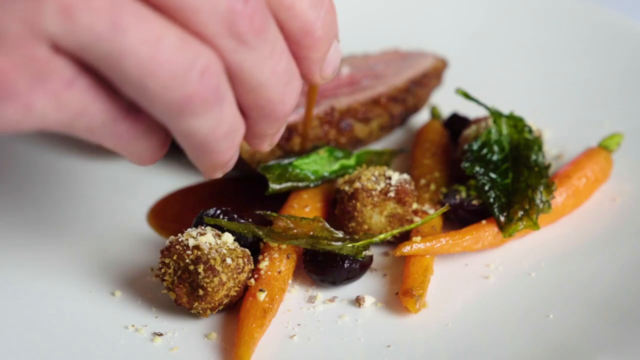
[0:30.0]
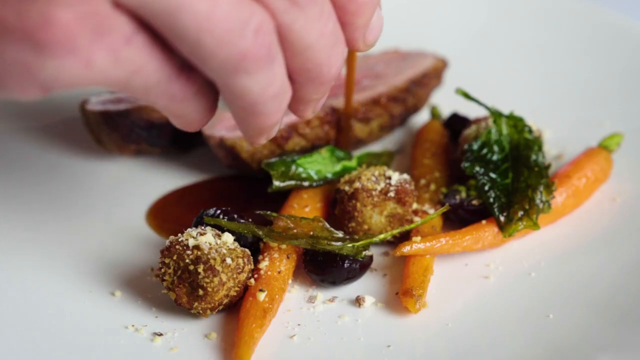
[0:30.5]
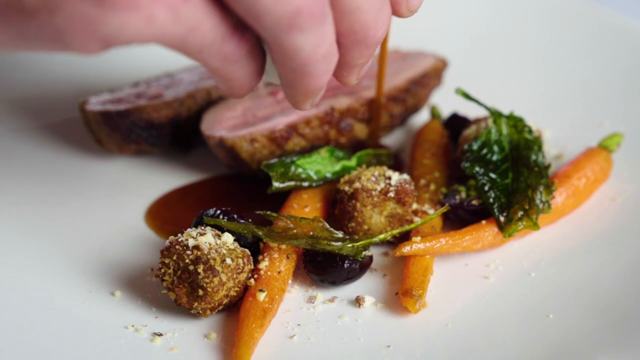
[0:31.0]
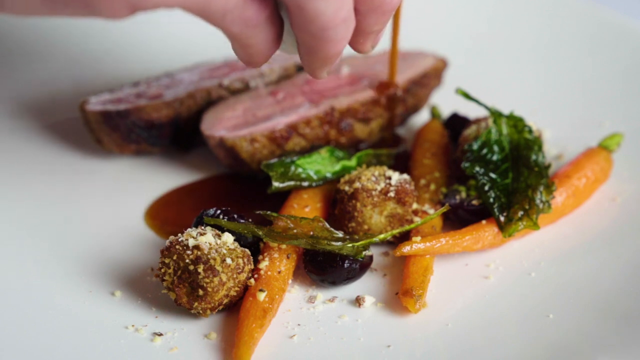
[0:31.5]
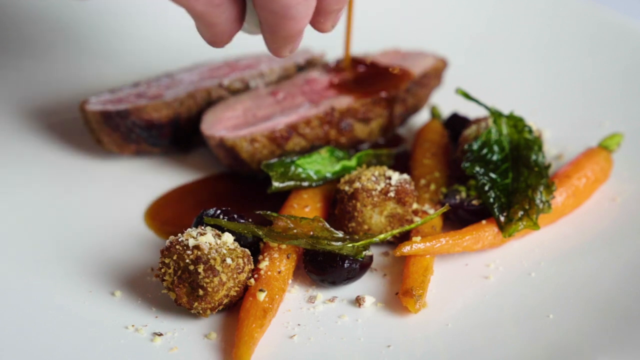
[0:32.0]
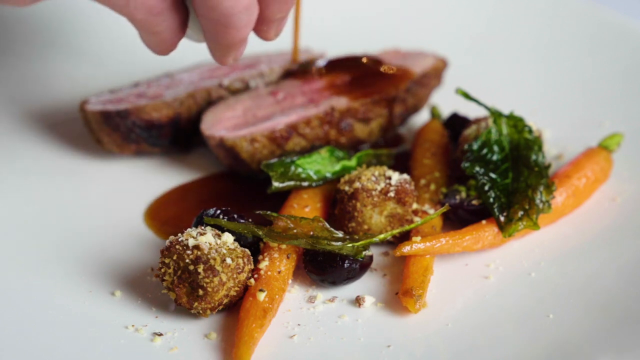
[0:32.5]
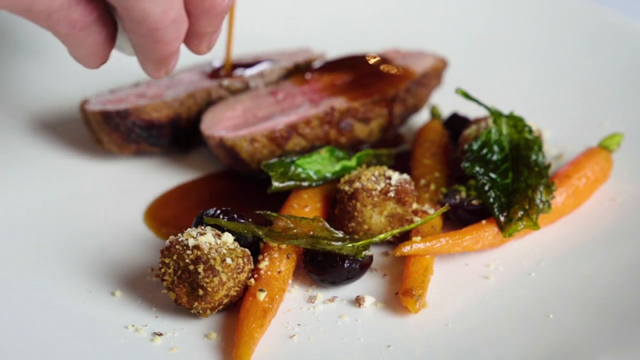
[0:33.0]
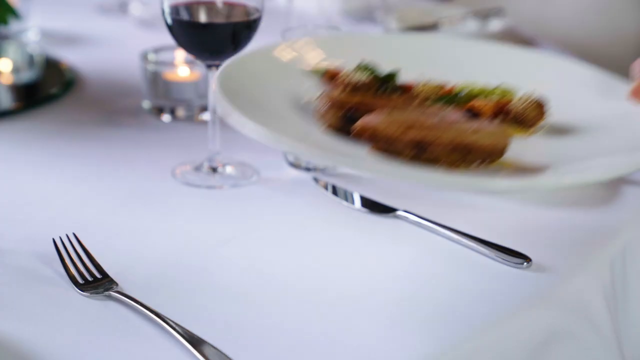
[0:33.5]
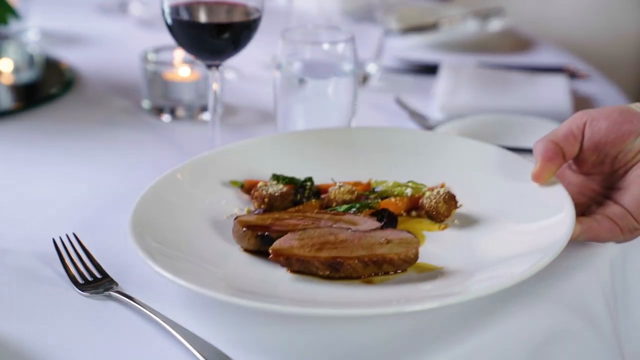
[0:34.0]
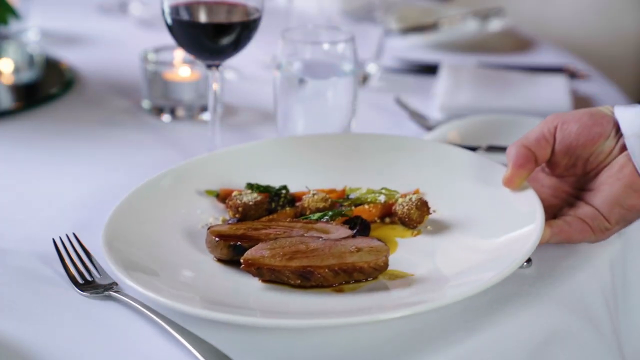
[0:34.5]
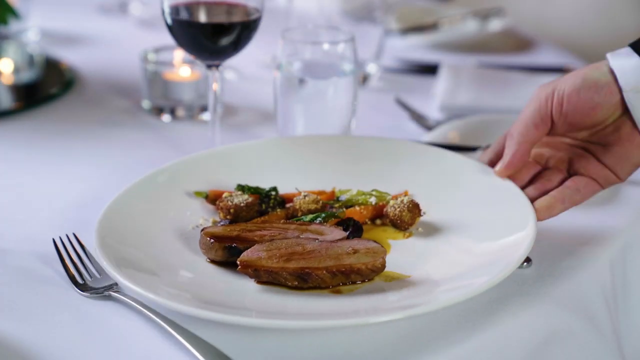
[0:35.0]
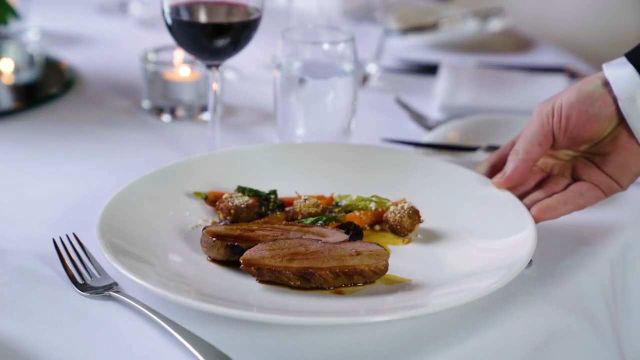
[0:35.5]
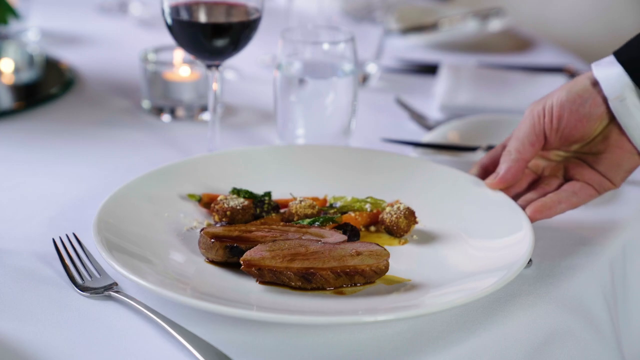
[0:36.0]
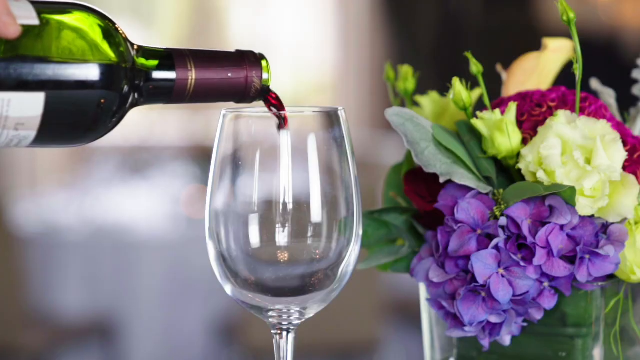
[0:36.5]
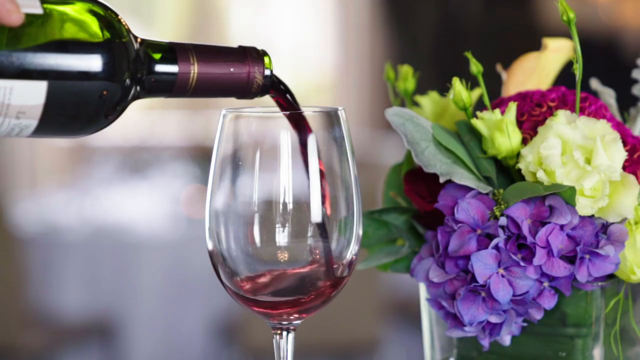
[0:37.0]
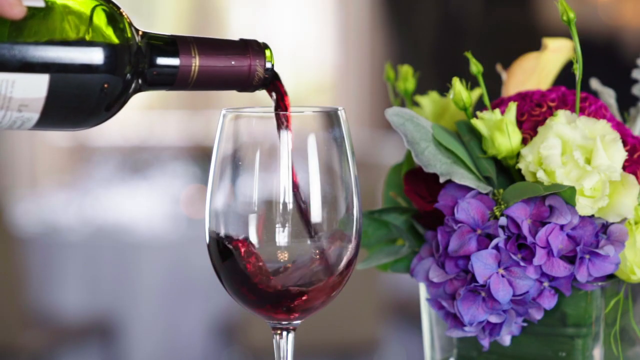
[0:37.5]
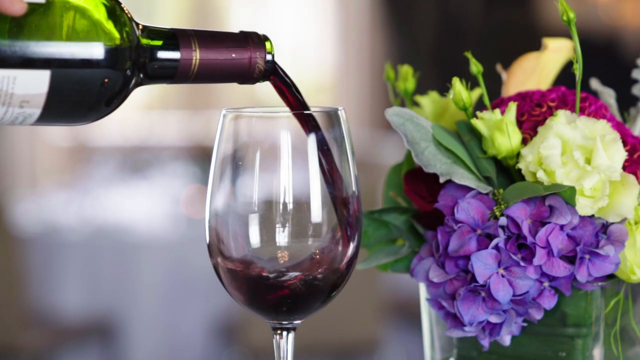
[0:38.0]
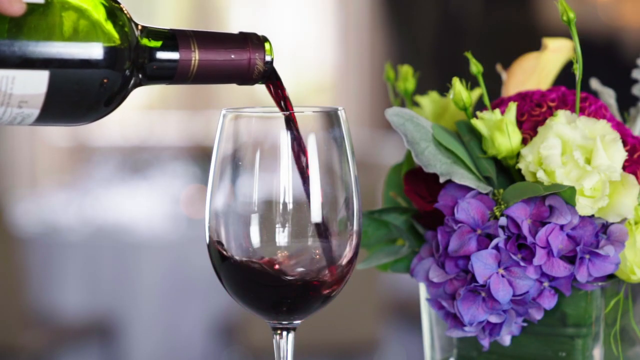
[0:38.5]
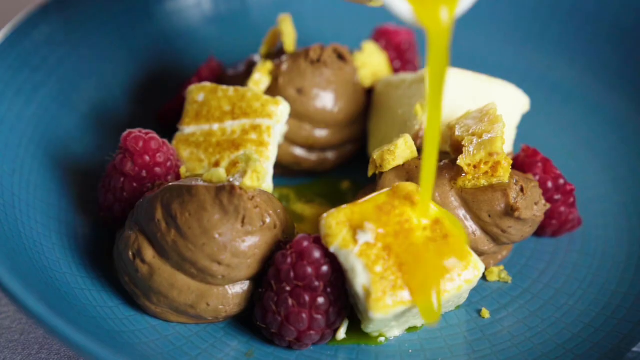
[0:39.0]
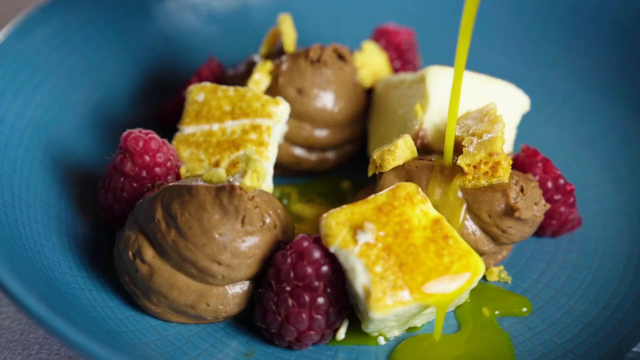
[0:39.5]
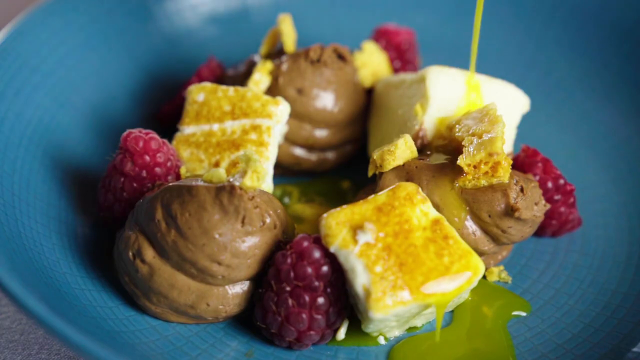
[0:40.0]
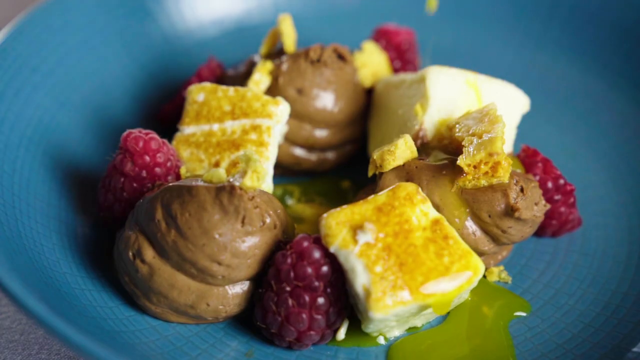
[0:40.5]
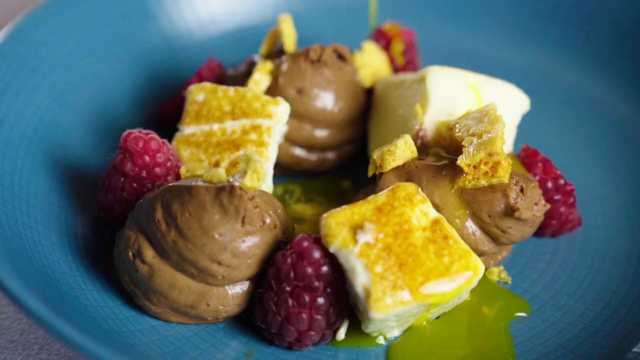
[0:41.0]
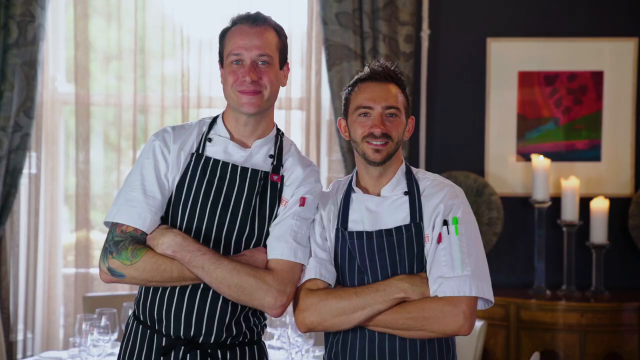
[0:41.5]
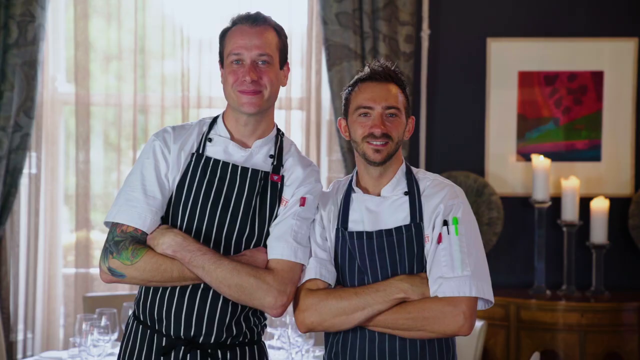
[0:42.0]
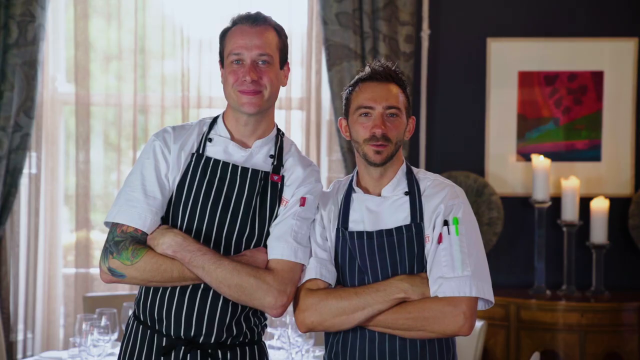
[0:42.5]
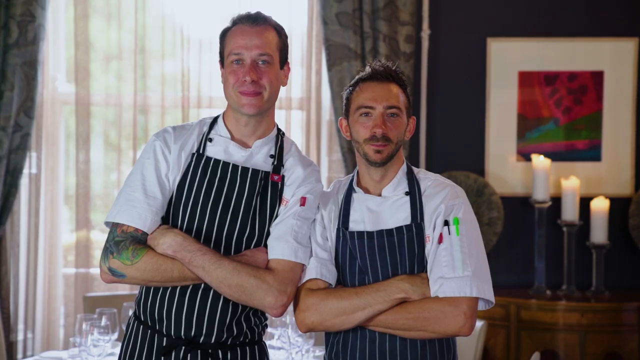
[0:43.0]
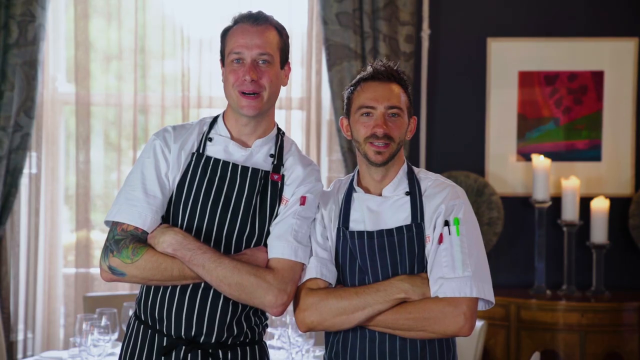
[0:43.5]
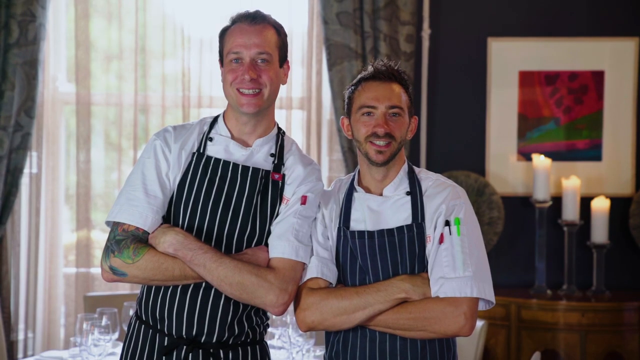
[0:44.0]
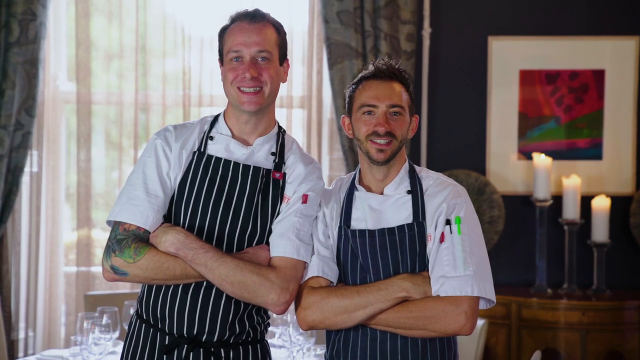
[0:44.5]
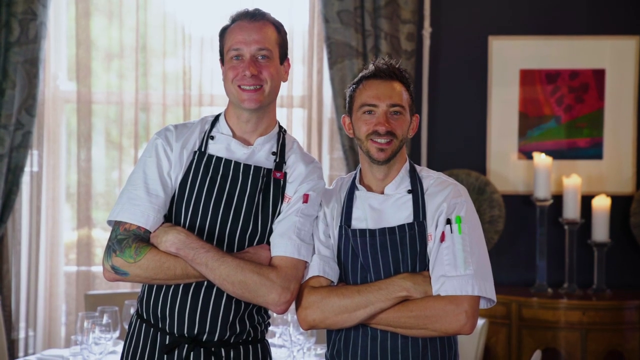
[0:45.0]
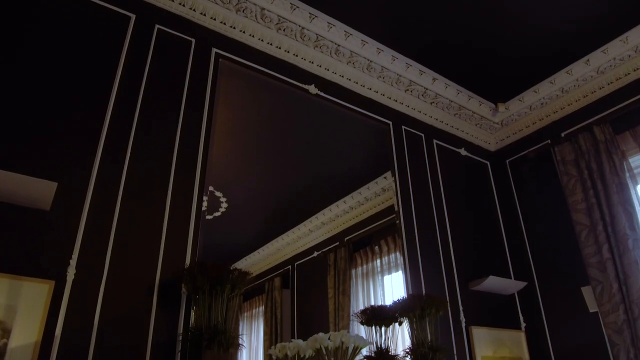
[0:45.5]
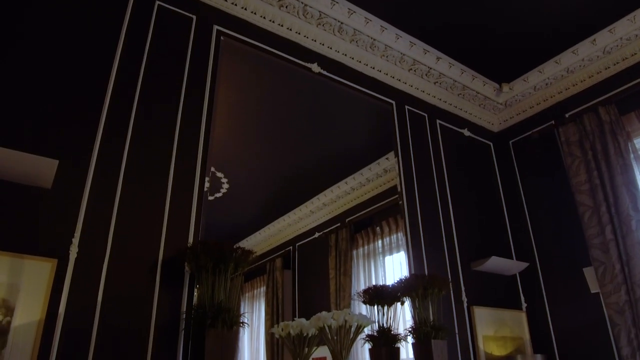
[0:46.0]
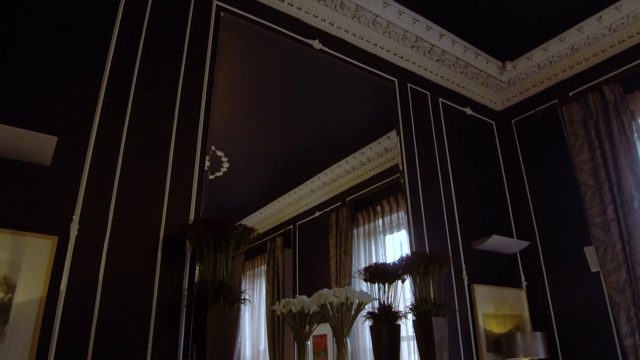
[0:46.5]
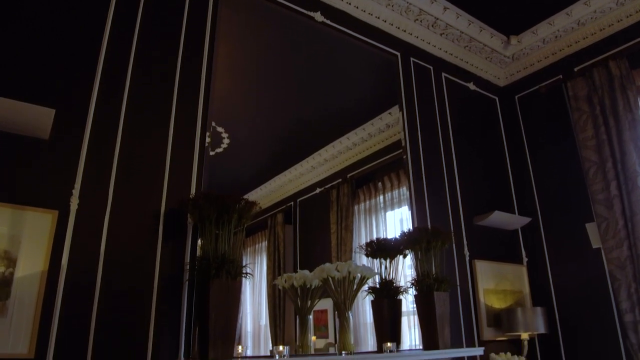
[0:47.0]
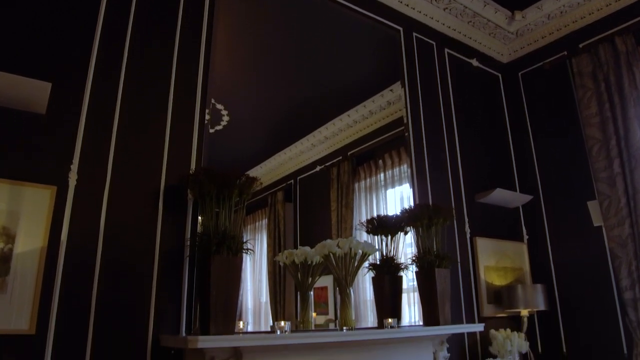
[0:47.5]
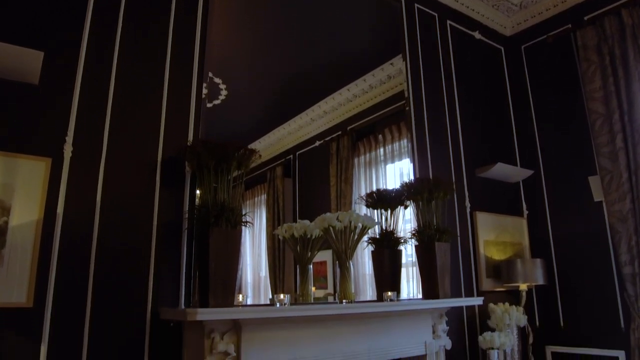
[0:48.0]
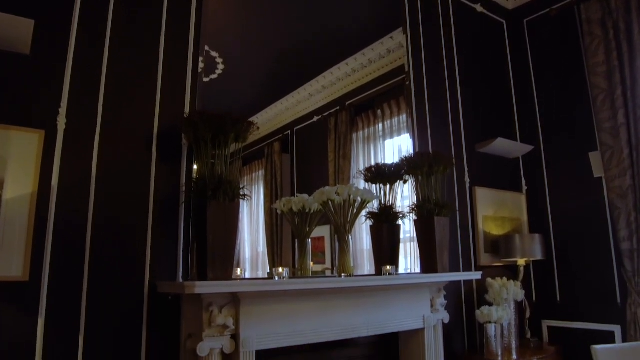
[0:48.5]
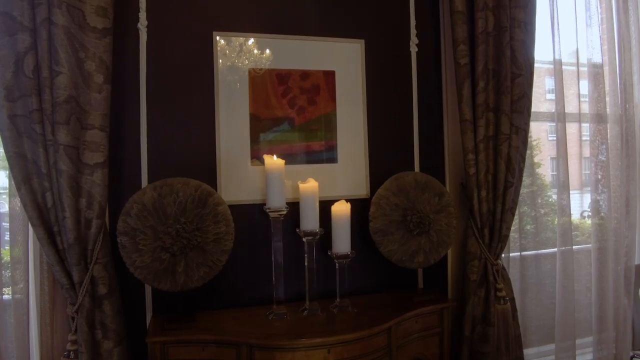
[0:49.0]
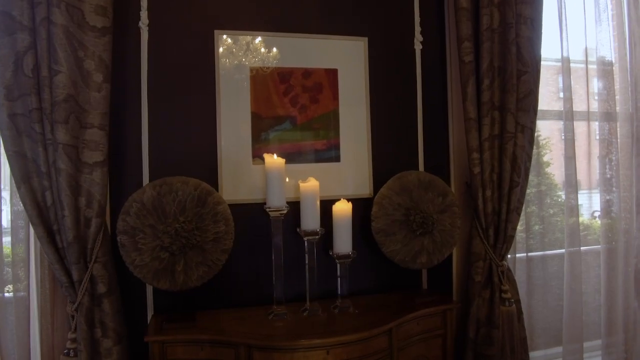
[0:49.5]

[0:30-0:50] The cuisine served at the restaurant is shown, along with a couple of chefs who work there. The place seems to be some sort of historic resort or hotel, possibly not in the United States, and looks very romantic and expensive. The lighting and chandeliers are fancy. It looks like it has been around for a long time and appears to have been restored and upgraded while still looking historic.